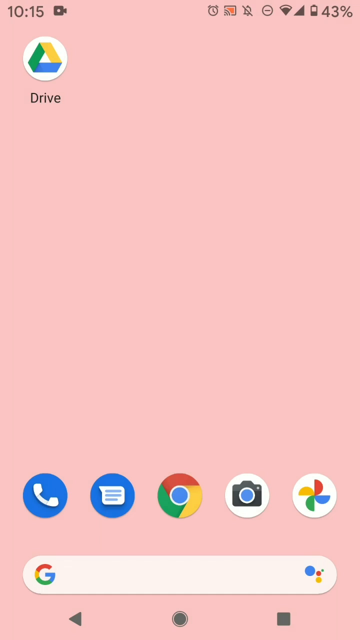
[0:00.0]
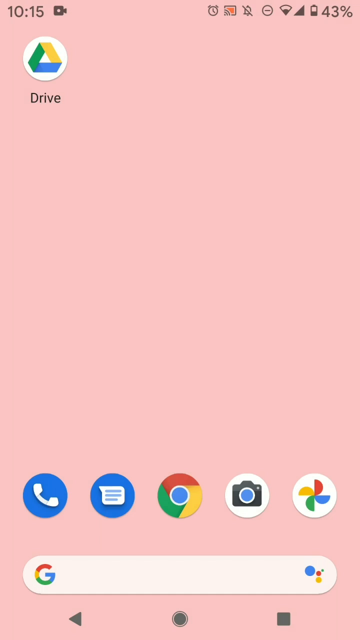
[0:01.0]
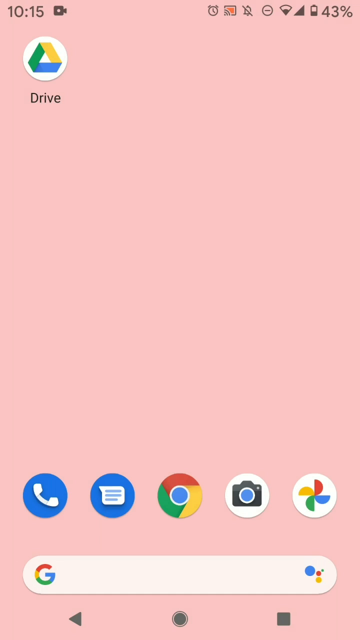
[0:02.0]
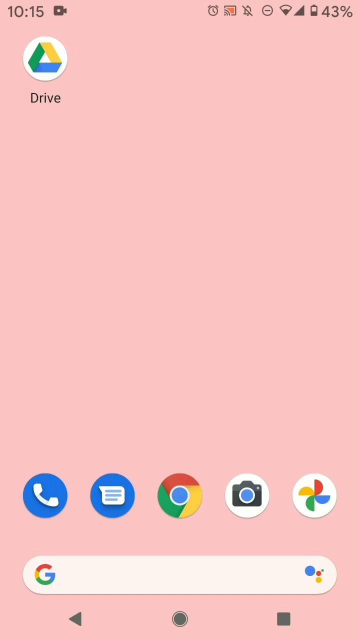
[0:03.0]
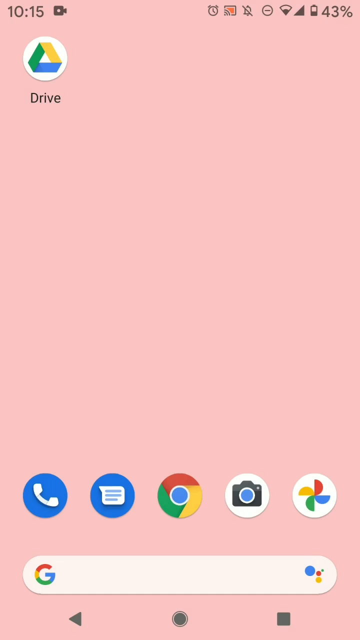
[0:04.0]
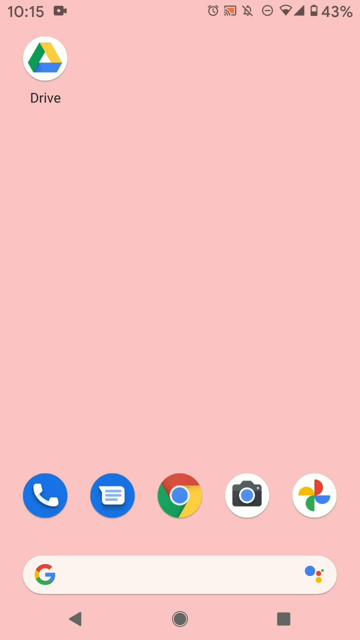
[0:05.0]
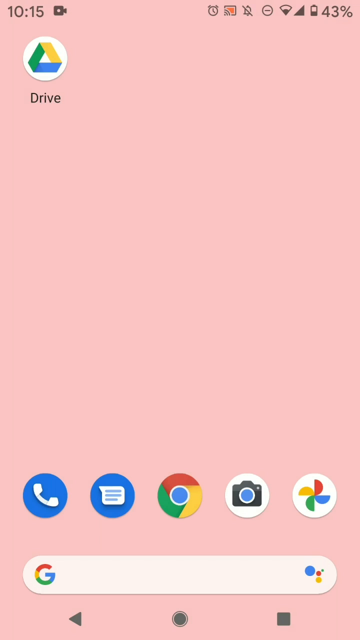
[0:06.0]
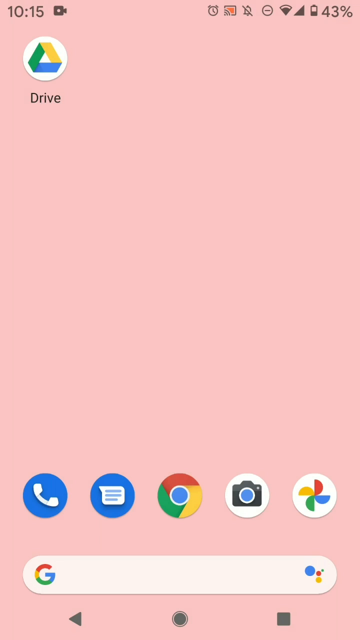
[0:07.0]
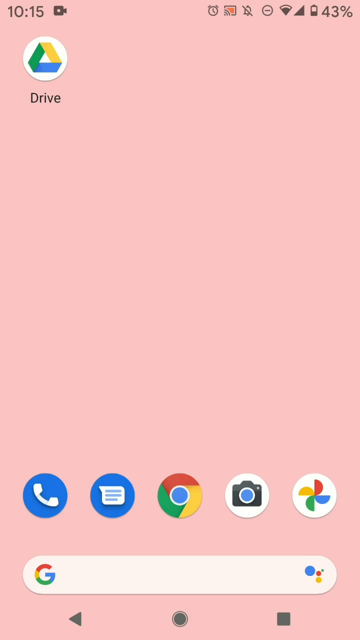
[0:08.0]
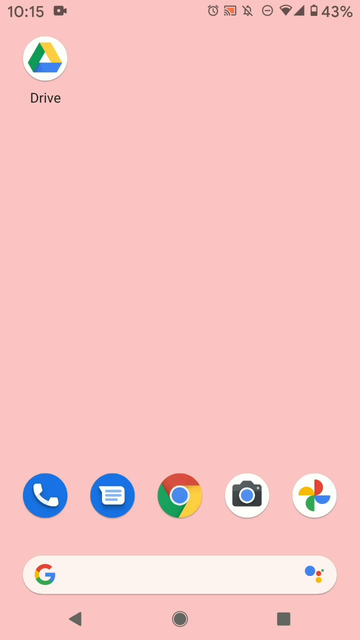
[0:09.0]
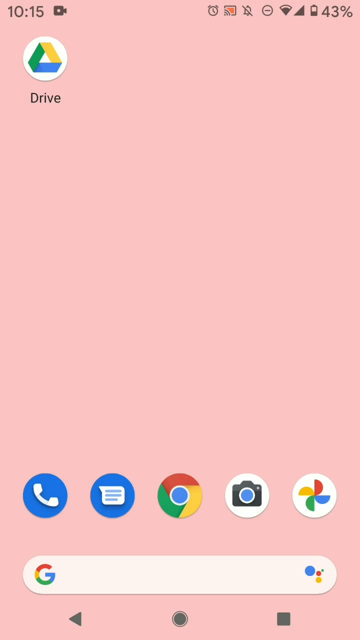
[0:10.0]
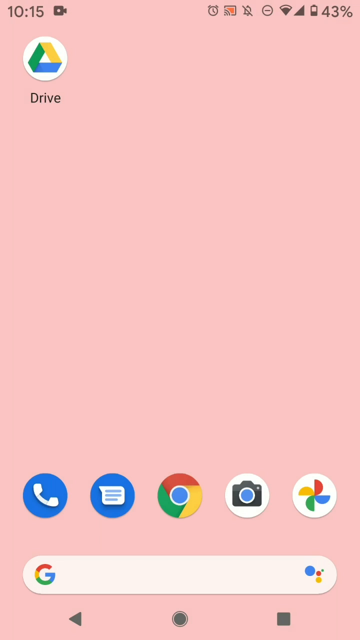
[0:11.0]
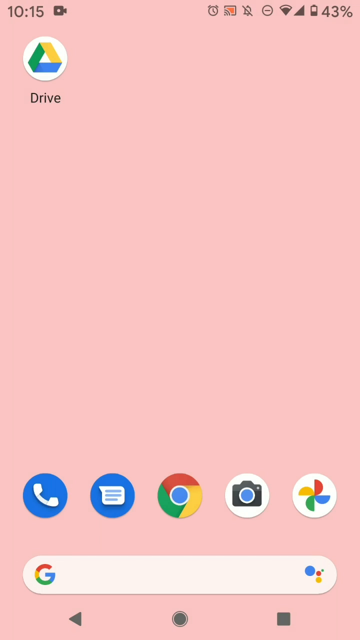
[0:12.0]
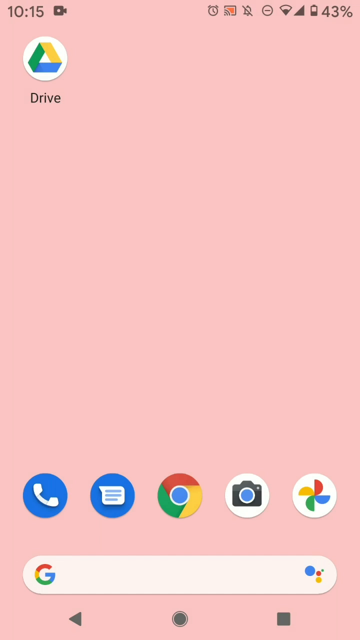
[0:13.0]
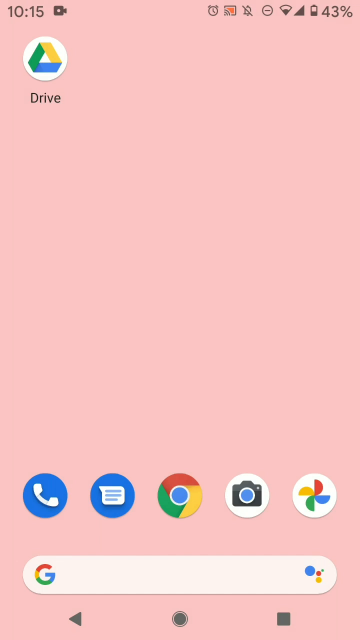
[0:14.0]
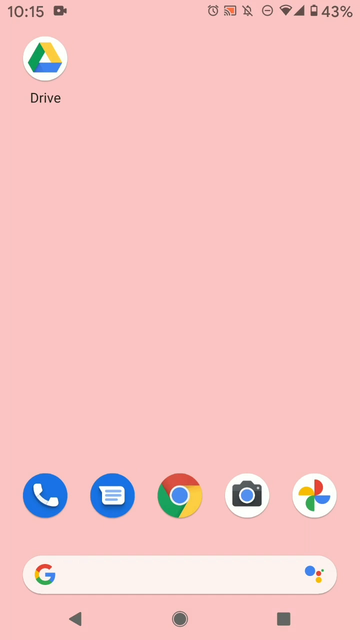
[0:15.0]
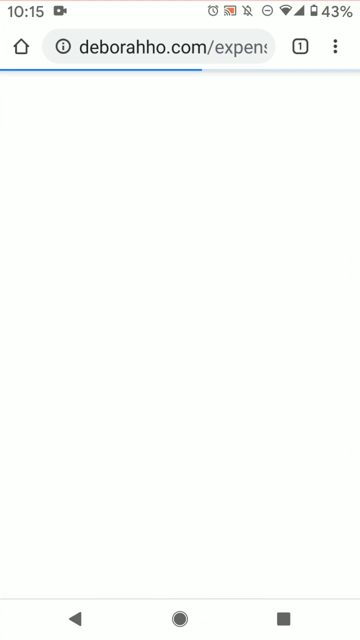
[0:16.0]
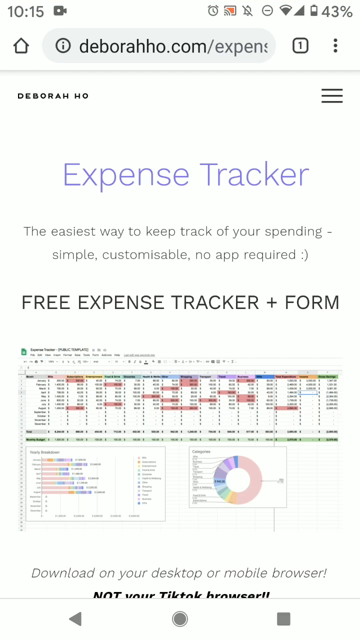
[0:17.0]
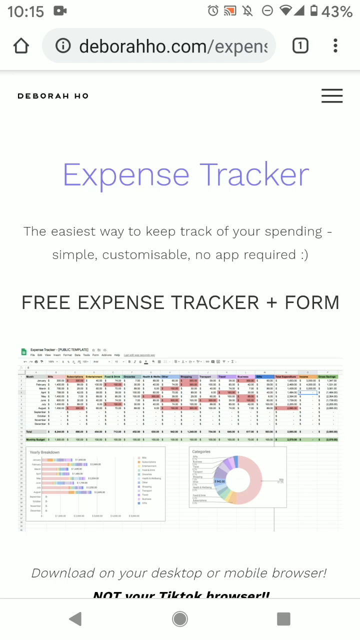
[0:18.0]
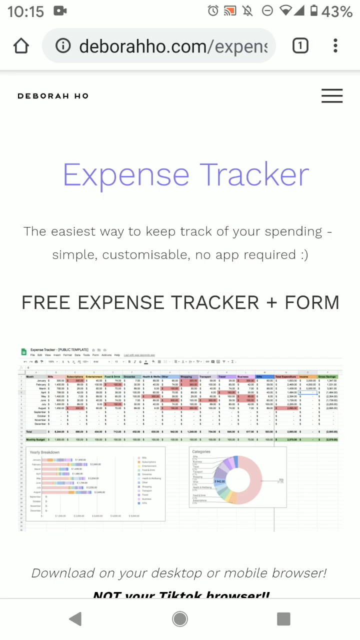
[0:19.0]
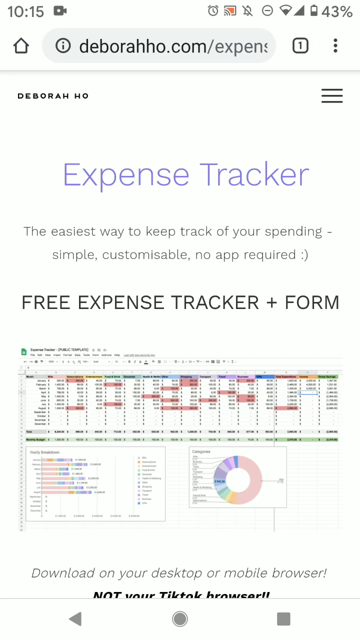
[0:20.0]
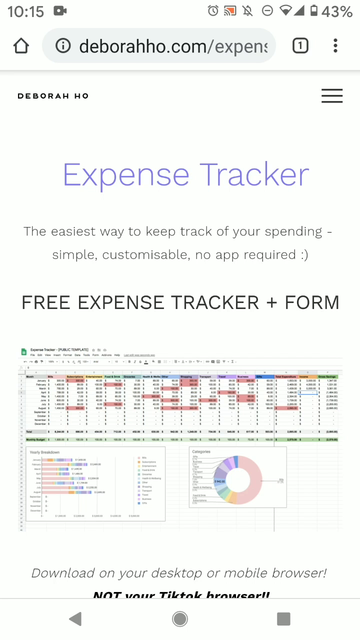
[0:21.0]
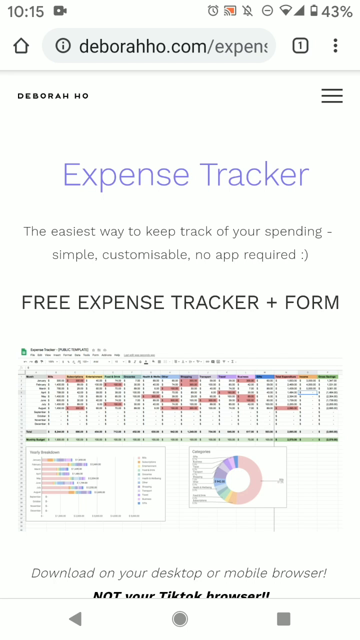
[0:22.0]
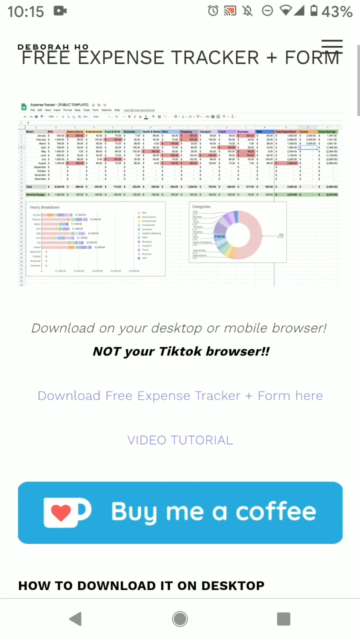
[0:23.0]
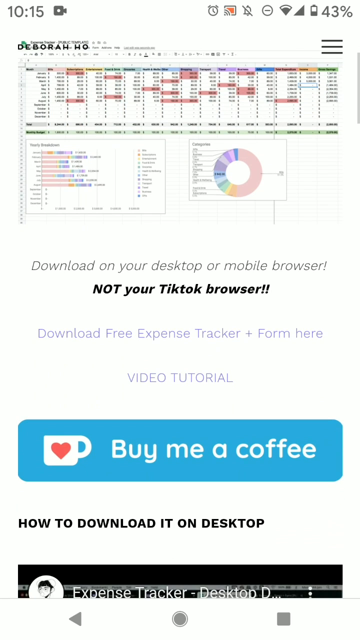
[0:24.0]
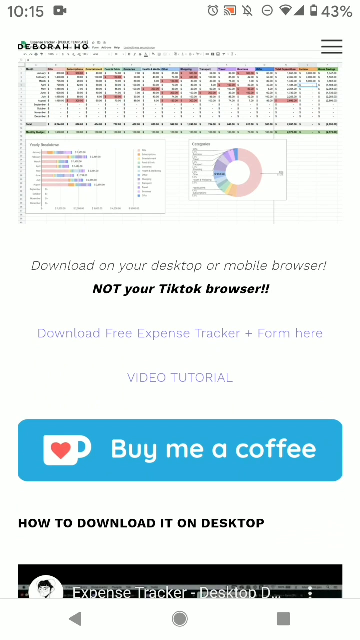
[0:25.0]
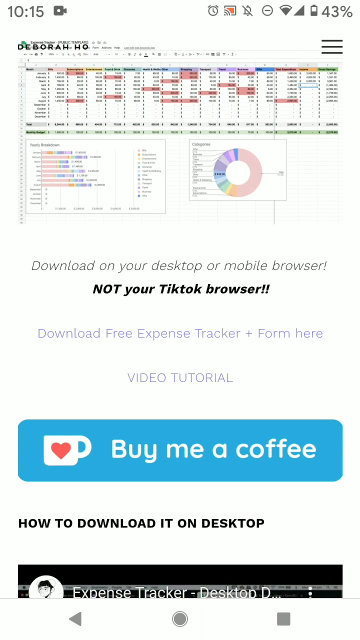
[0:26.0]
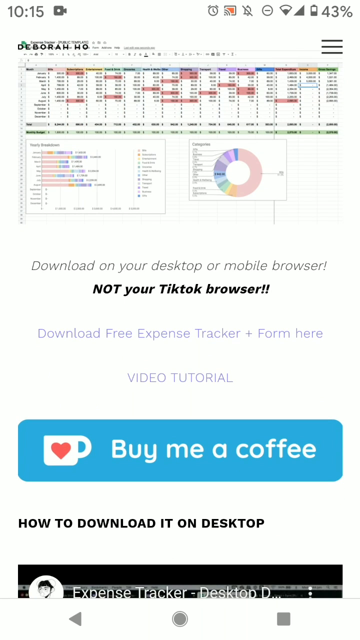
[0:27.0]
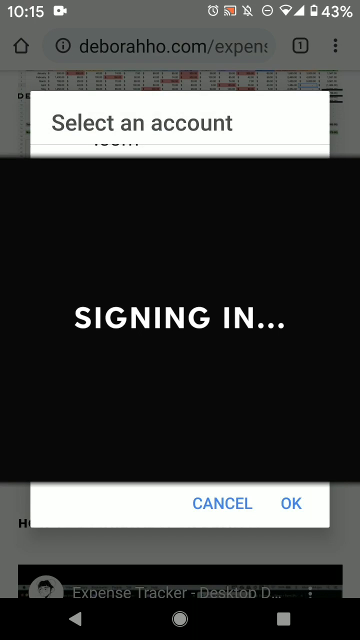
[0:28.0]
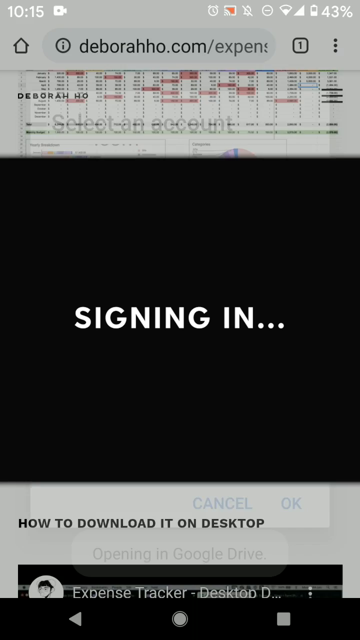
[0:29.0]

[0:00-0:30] A smartphone interface appears with a lighted pink background. At the top left are the numbers 10, 15, followed by what appears to be a camera icon. Farther right is some kind of icon, then a notification bell icon with a diagonal line slashed through it from top left to bottom right, some sort of circle icon, a Wi-Fi icon that is not quite full, a full signal icon, and a half-full battery icon followed by 45%. At the very top left of the home screen is a white circle containing what appears to be the Google Drive logo in green, yellow and blue, with black text below it reading "Drive". At the bottom are what appear to be five icons: a blue circle with a white handset, what appears to be another blue circle with a comment bubble inside, the Google Chrome icon with red, yellow and blue, a camera icon with red circles, and another circle with something like a pinwheel on it. There is also a Google Search icon. The screen then changes to what appears to be an expense tracker page with various text, including "download on your desktop from mobile browser", "not your TikTok browser", "Download free expense tracker plus form", "video tutorial", "Buy me a coffee" in a sort of blue rectangle, and "How to download it on desktop". The page scrolls down, then changes to a sign-in screen.